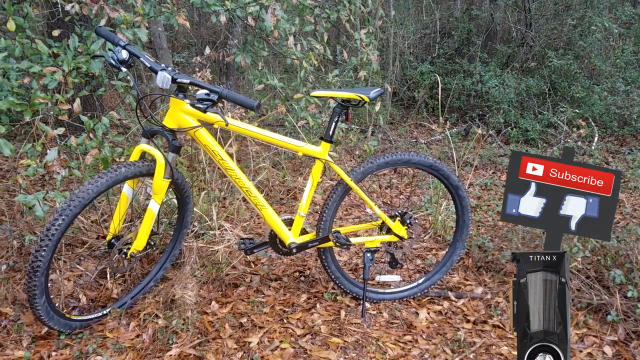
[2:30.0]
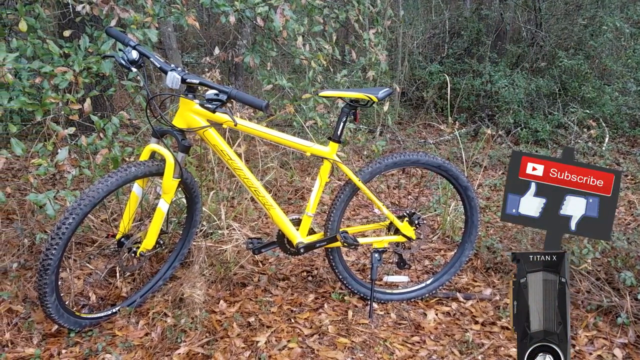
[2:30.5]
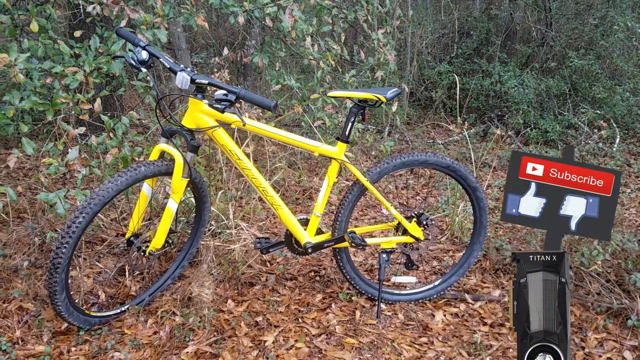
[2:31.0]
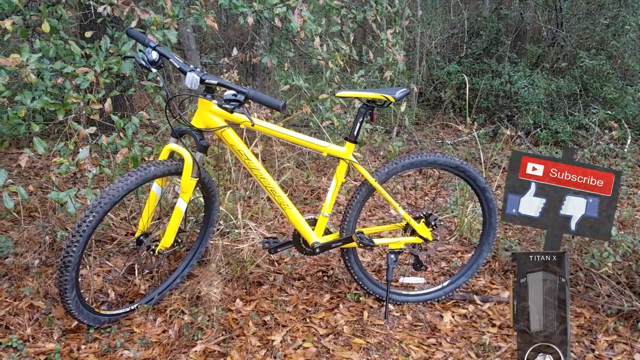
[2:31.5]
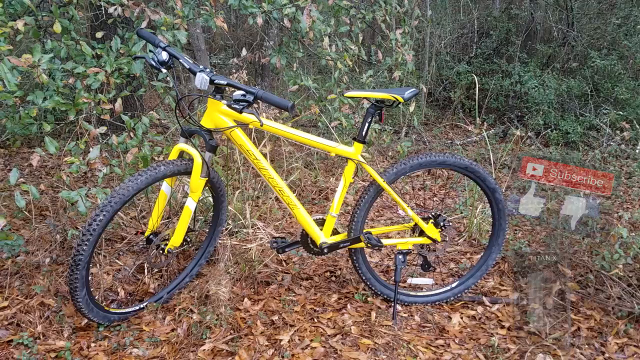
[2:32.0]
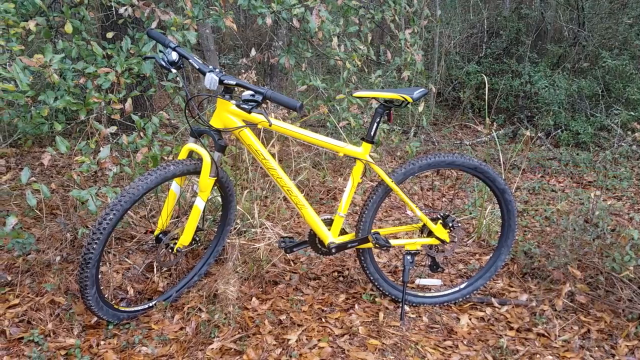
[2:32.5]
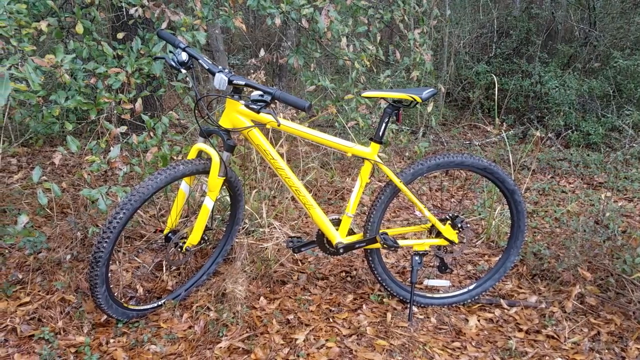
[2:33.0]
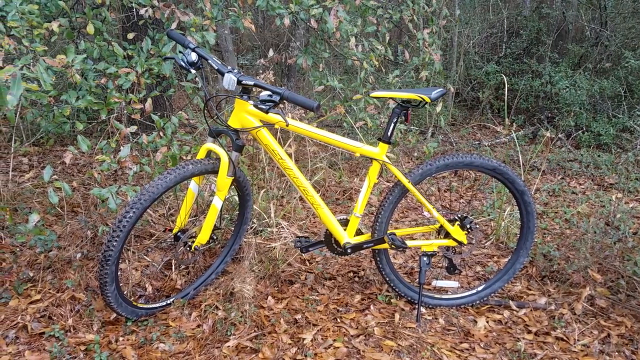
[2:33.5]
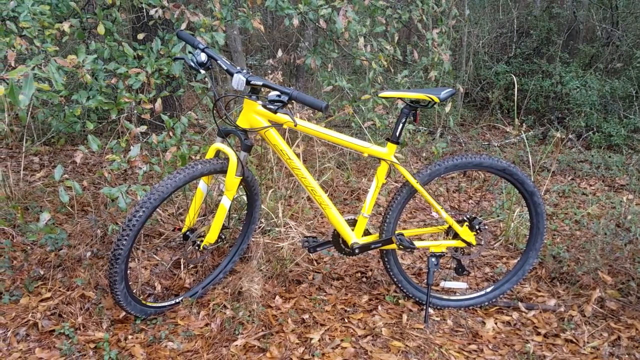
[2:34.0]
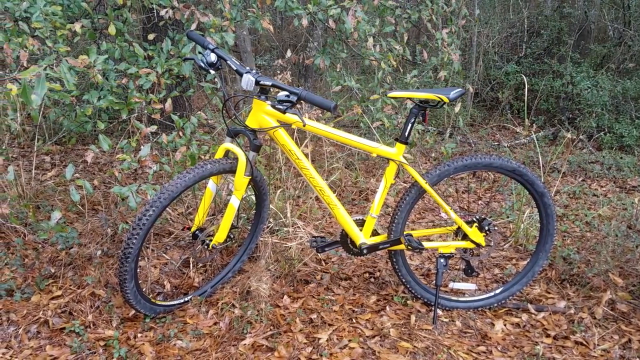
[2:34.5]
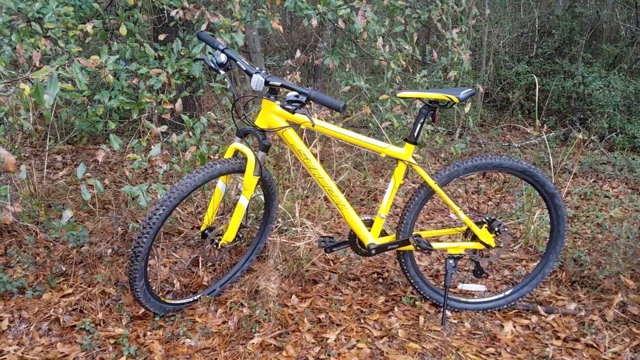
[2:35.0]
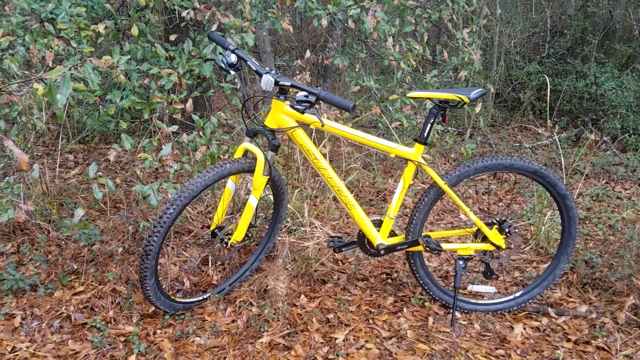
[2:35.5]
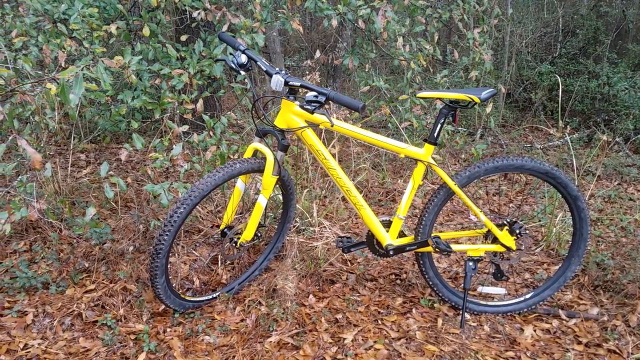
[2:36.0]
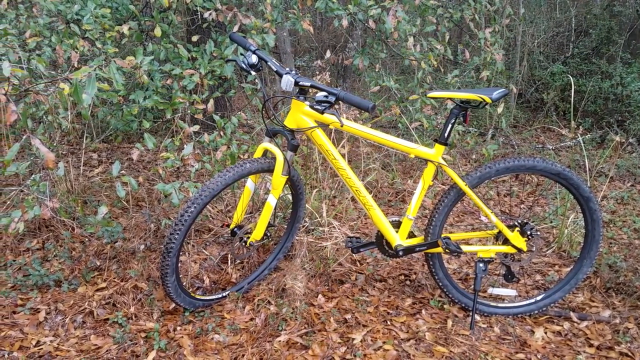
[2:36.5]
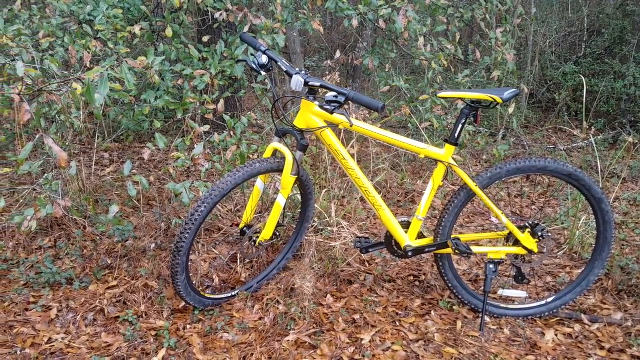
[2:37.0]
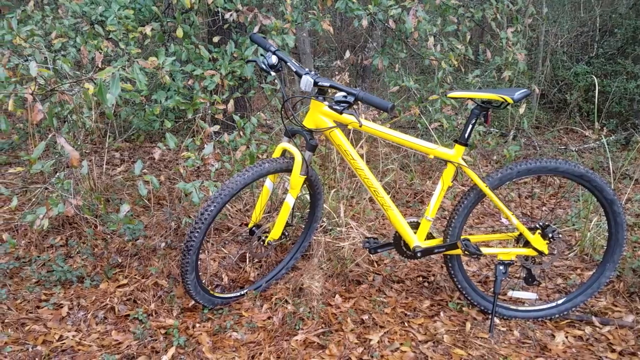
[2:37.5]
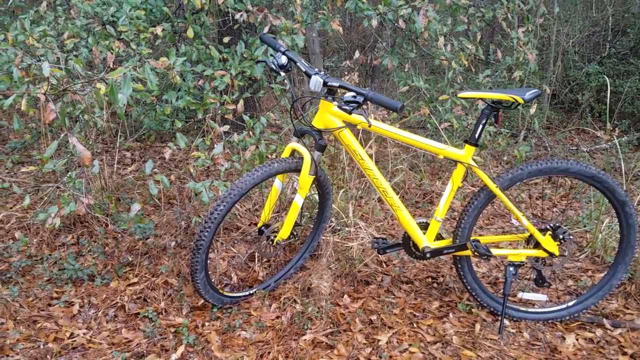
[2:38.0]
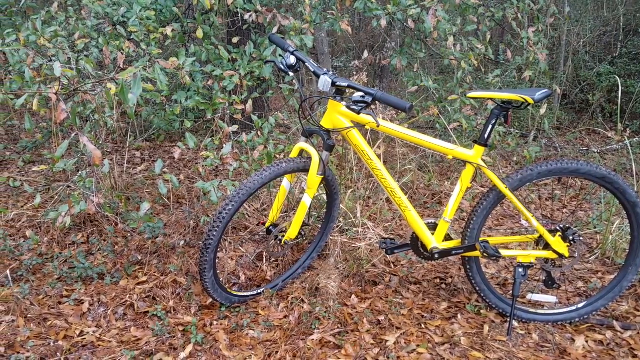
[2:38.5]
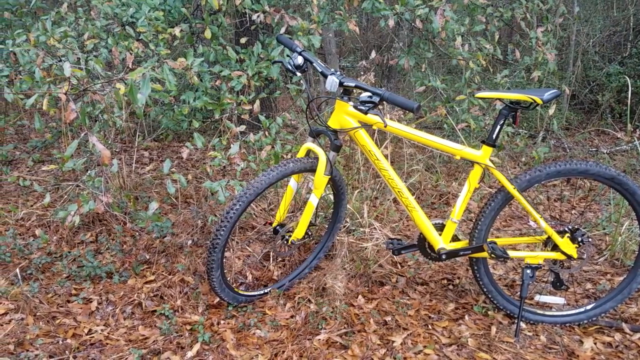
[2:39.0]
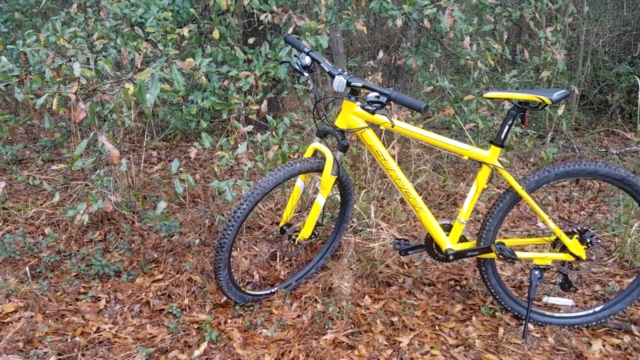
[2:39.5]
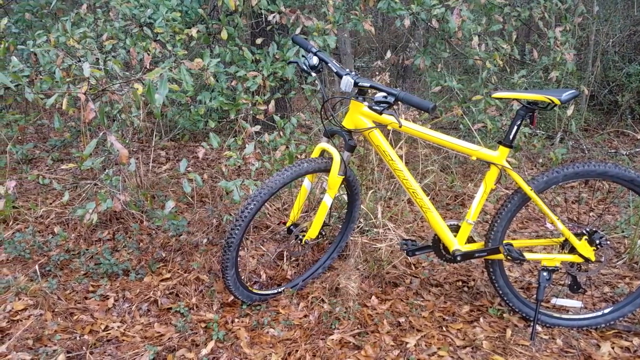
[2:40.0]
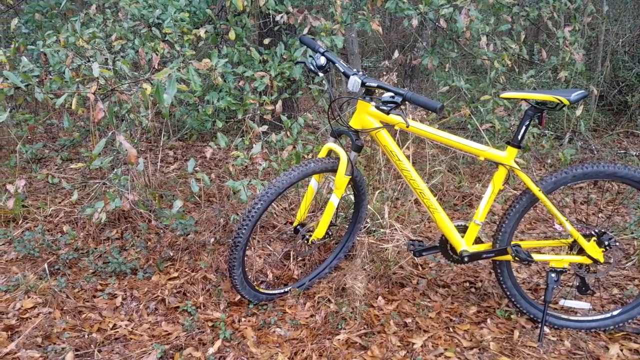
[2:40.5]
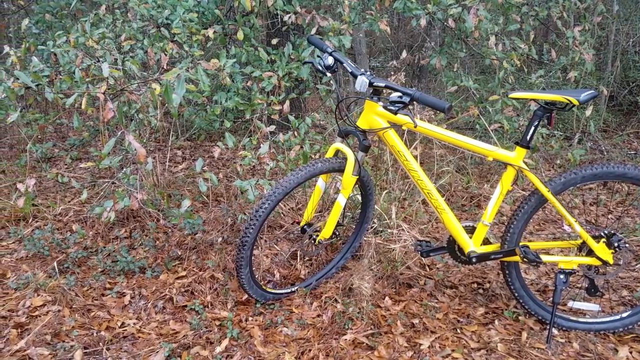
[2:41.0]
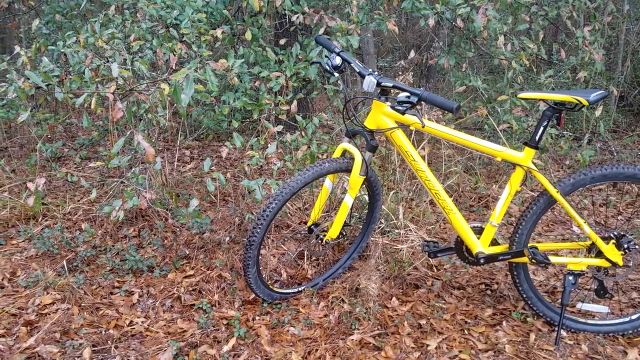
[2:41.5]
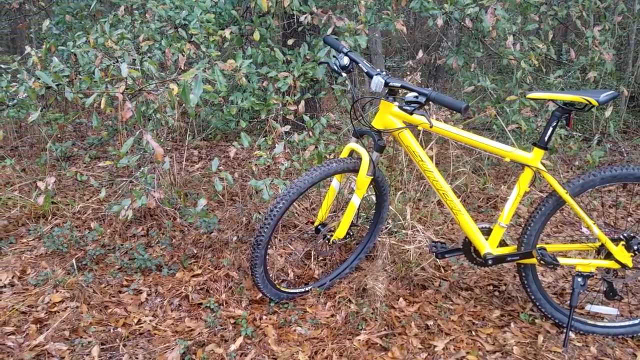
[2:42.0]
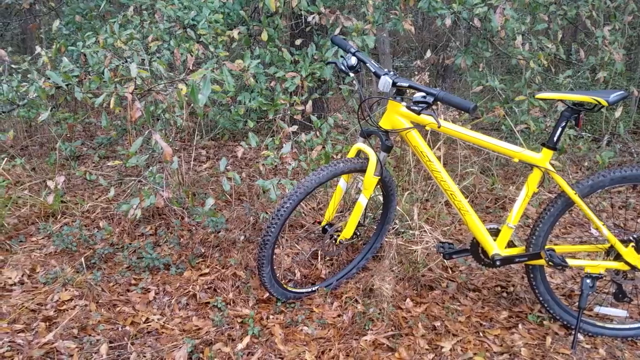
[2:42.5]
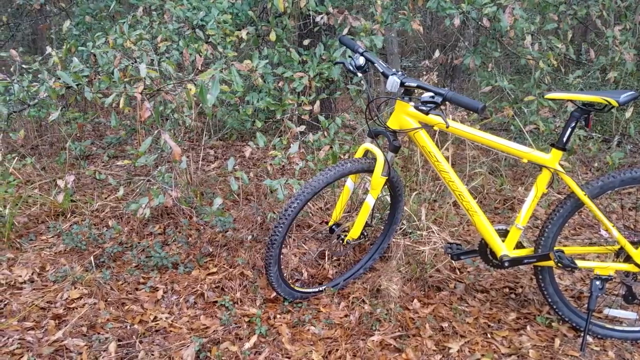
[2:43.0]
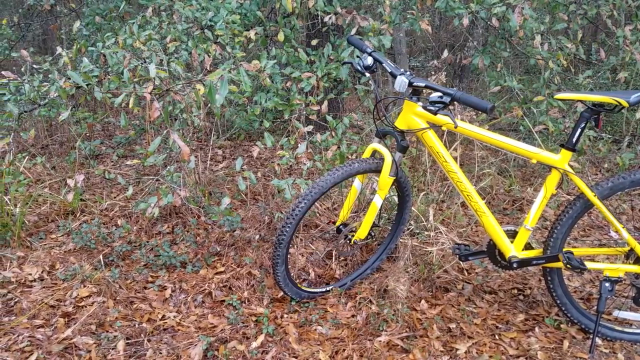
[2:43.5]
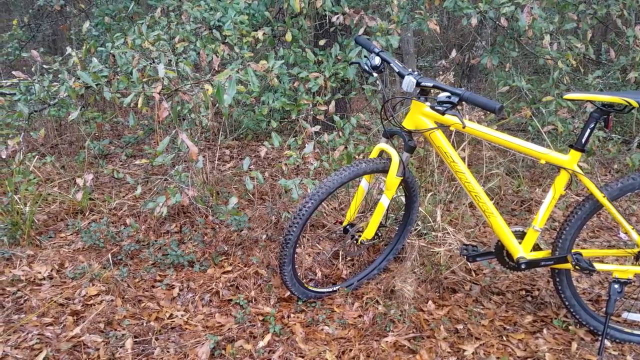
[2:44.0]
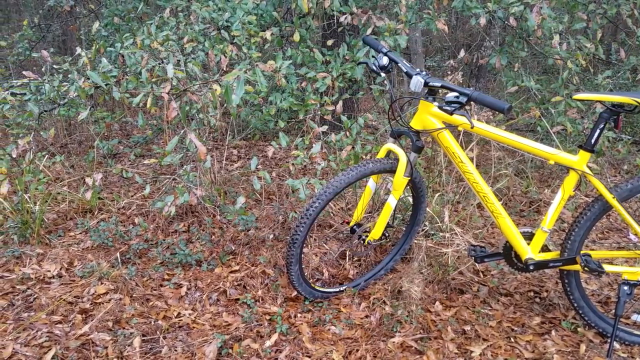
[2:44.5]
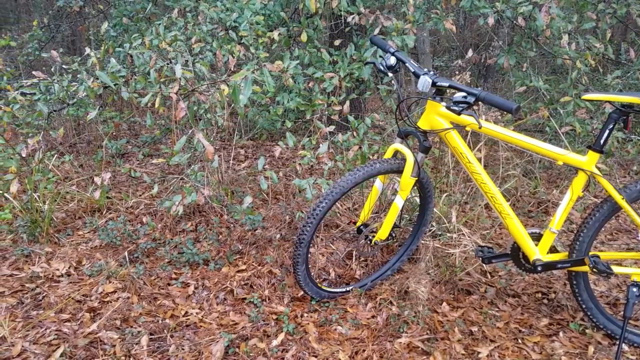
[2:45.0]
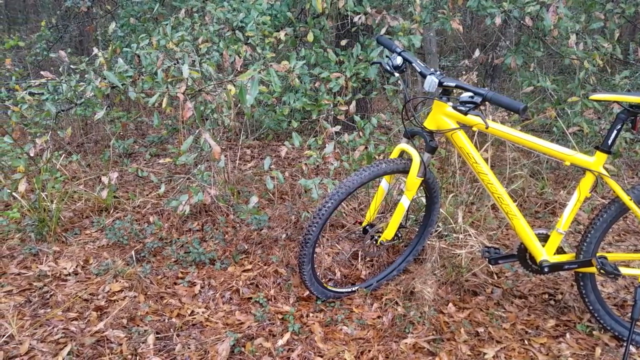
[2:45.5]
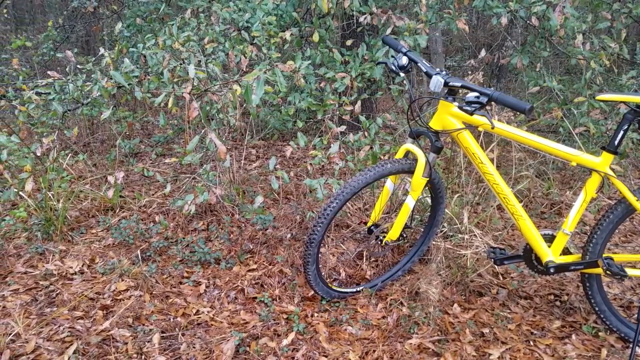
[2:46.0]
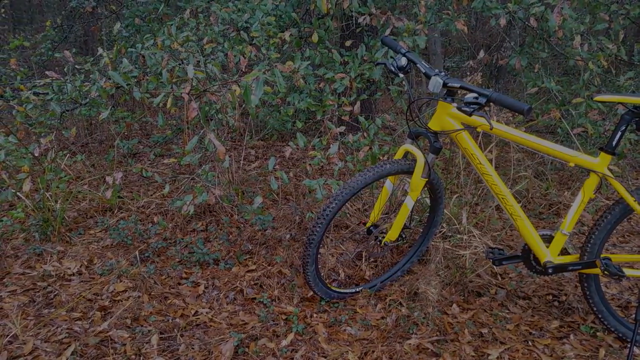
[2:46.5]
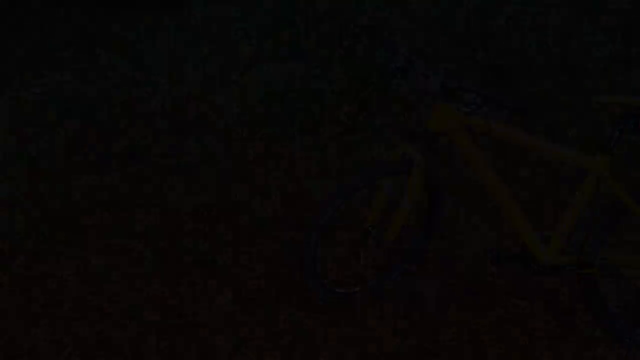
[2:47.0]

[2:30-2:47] The rider is a young girl, probably around 14 or 15, with shoulder-length hair and a blue jacket with white stripes. A Like and Subscribe button pops up. There appear to be interesting plants in the background, and mostly dirt and leaves underfoot. A logo says "Titan X."